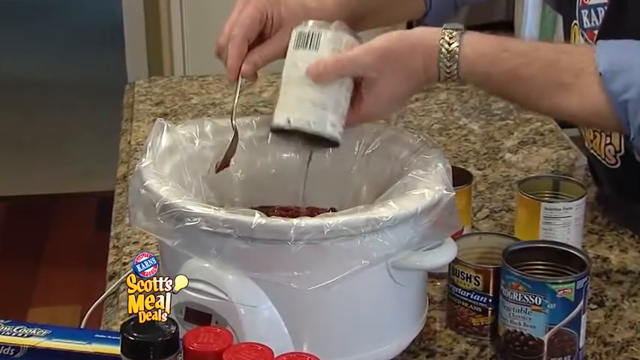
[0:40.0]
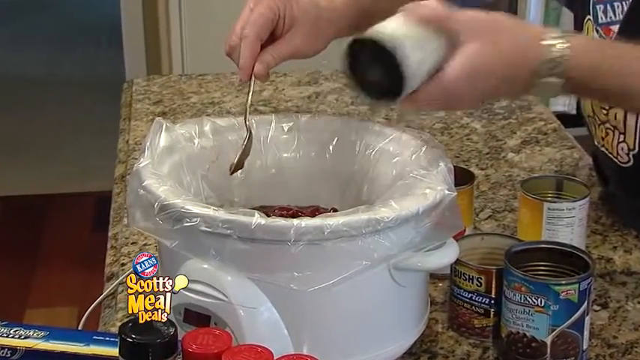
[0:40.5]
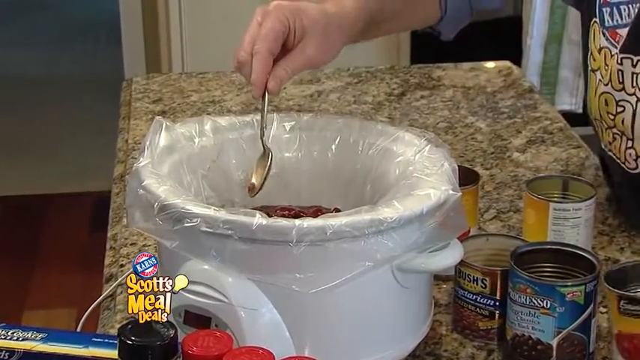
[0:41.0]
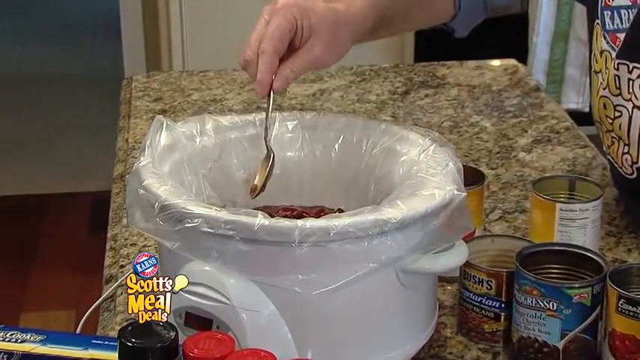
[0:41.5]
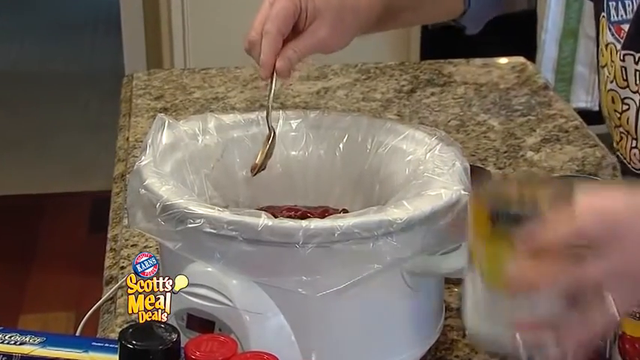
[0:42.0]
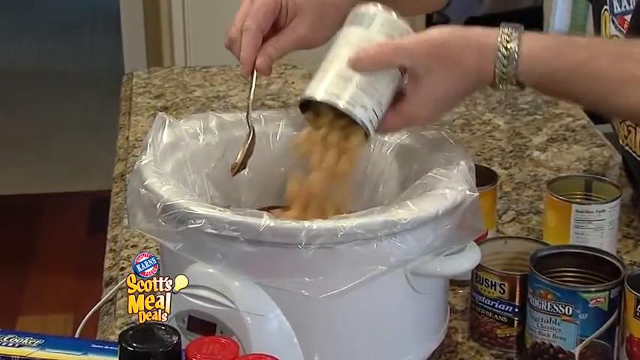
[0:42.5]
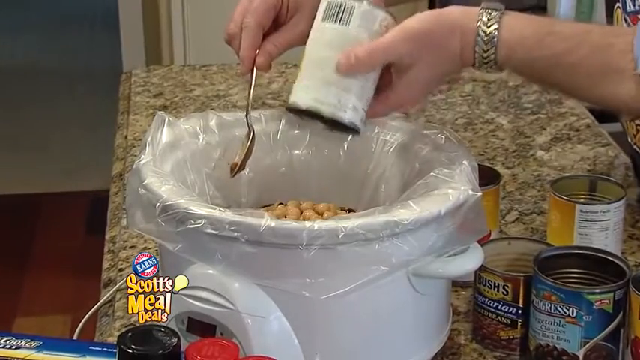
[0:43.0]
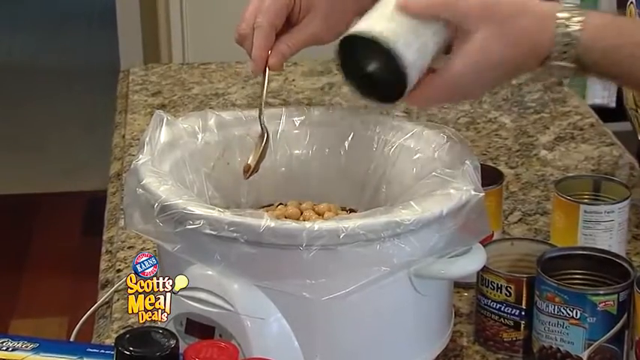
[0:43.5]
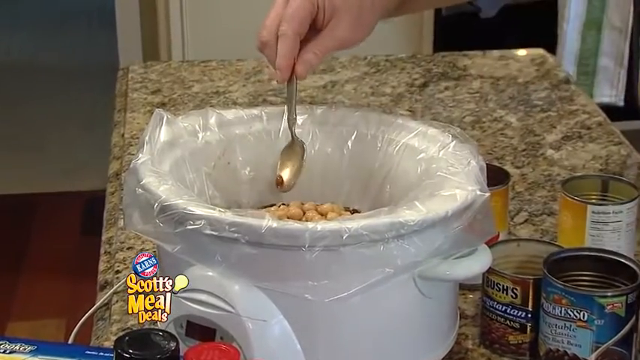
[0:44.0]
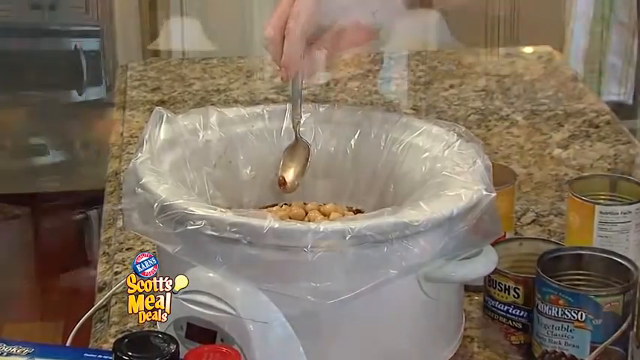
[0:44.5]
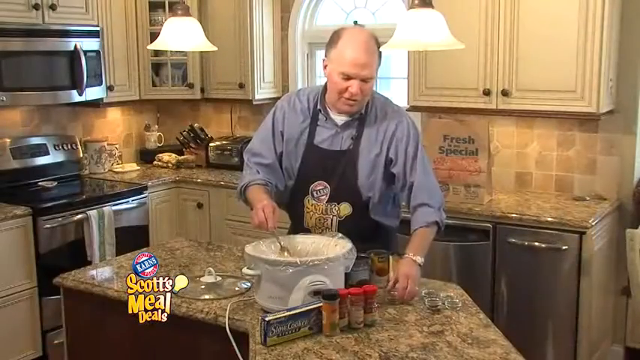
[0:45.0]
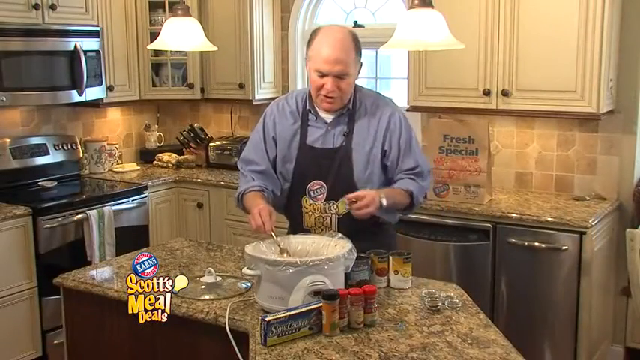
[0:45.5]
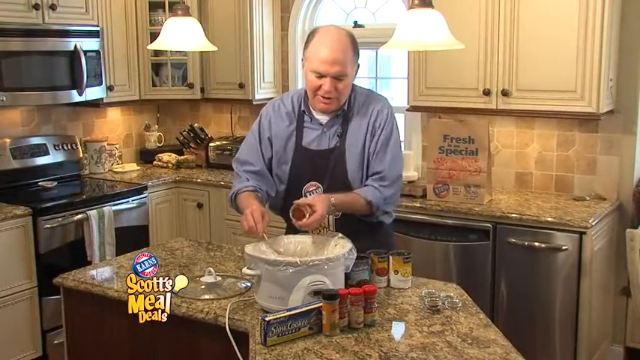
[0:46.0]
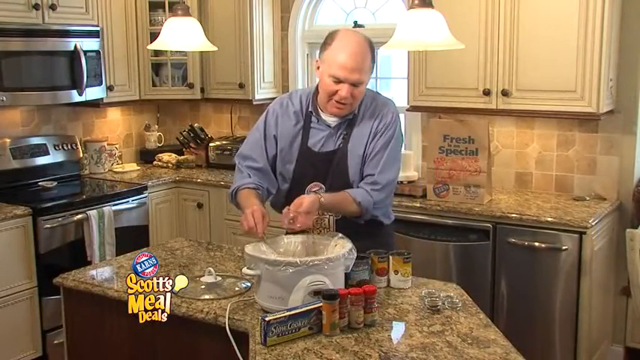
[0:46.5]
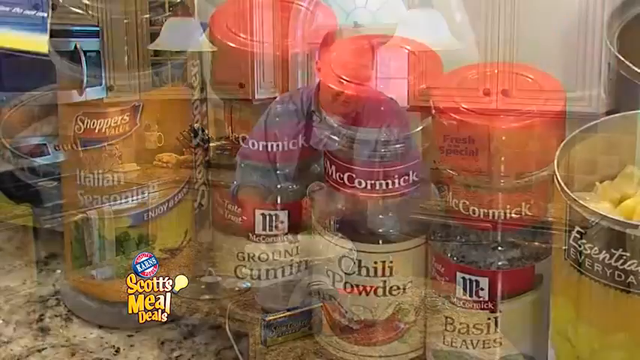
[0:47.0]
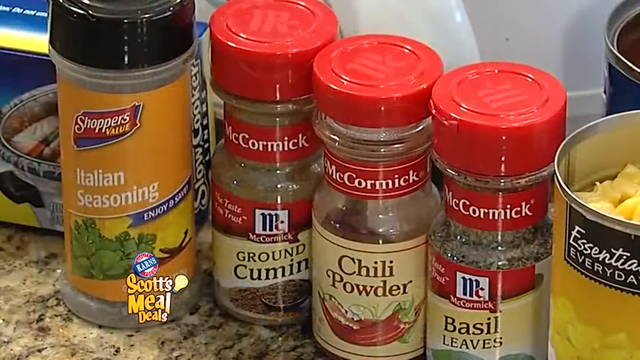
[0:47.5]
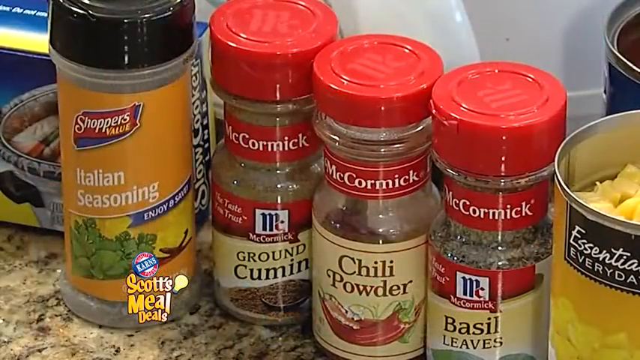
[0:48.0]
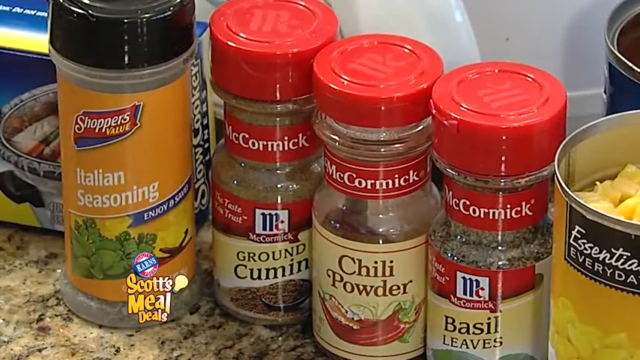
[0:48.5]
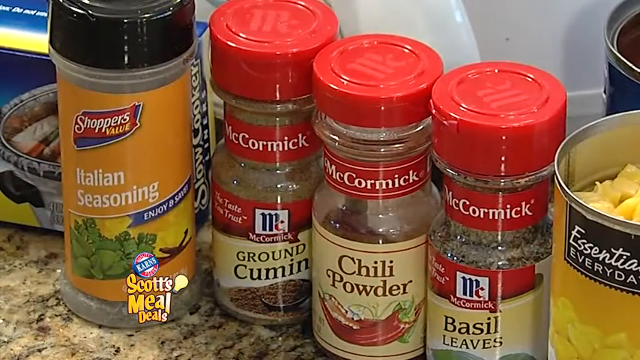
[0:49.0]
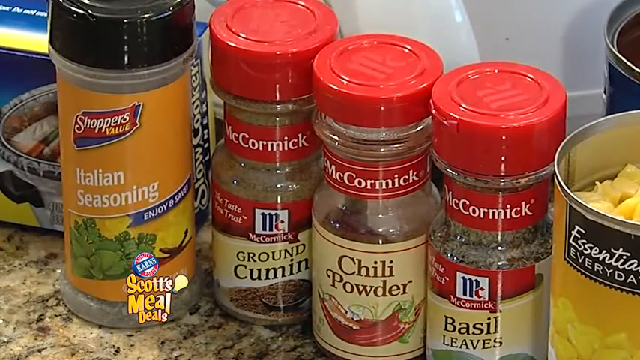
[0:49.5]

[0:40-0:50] The man adds a can of white beans to the slow cooker, followed by a series of spices. The shot cuts to the spices lined up in the order he uses them: Italian seasoning, ground cumin, chili pepper and basil. The Italian seasoning is a Shoppers brand in an orange bottle; the ground cumin, chili pepper and basil are McCormick brand, in see-through bottles with red labeling and tops. The seasoning was measured out beforehand, and the combined amount does not appear to be much, maybe a few tablespoons at most.